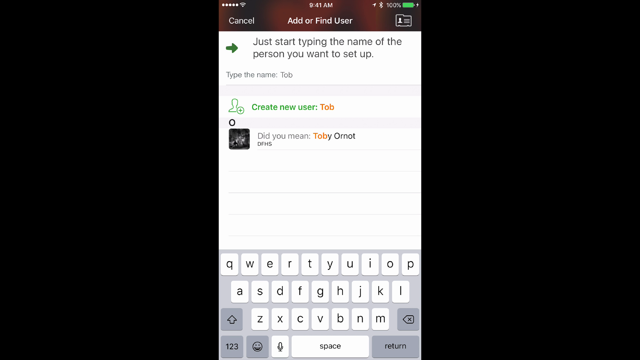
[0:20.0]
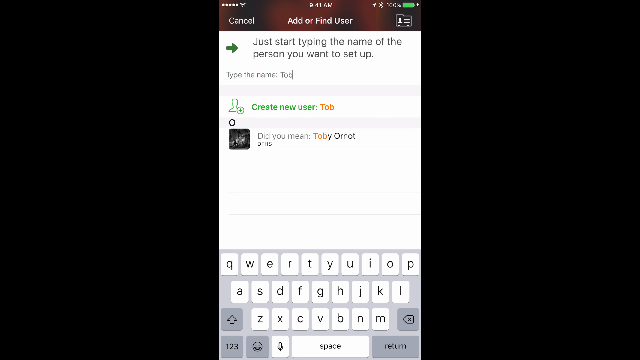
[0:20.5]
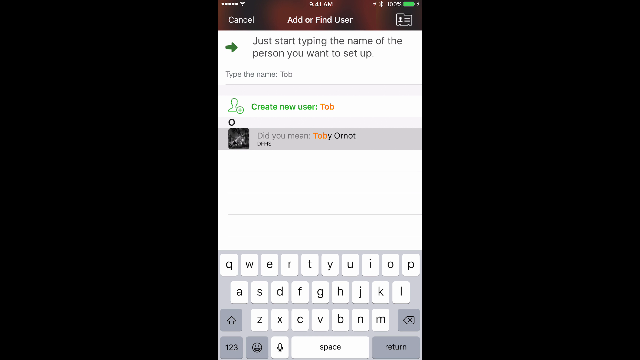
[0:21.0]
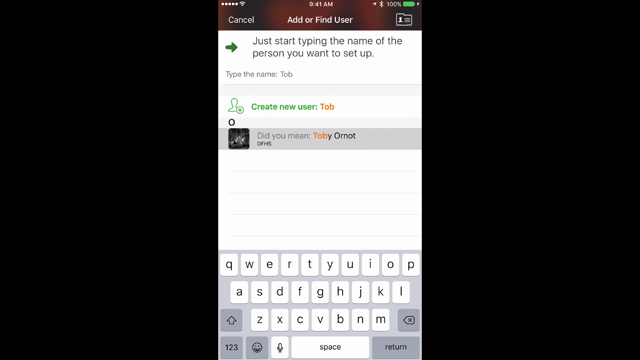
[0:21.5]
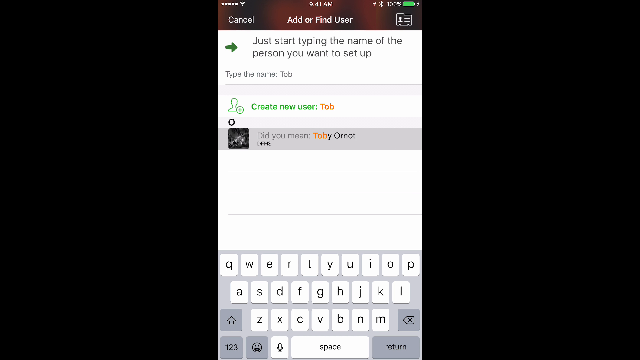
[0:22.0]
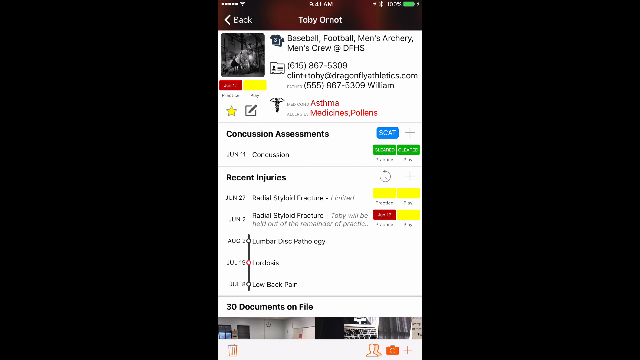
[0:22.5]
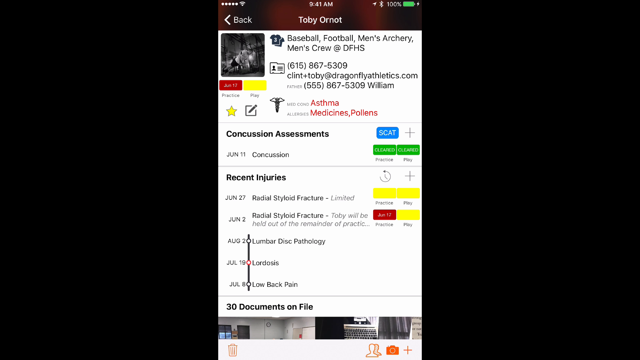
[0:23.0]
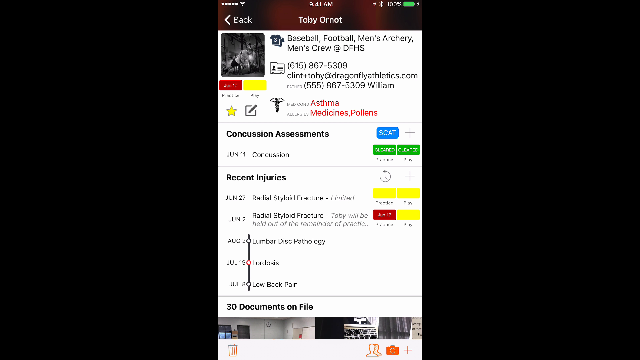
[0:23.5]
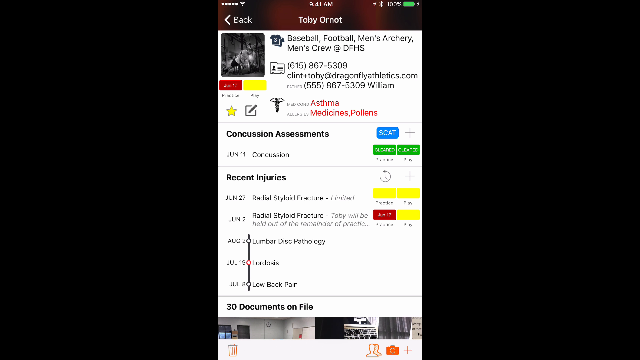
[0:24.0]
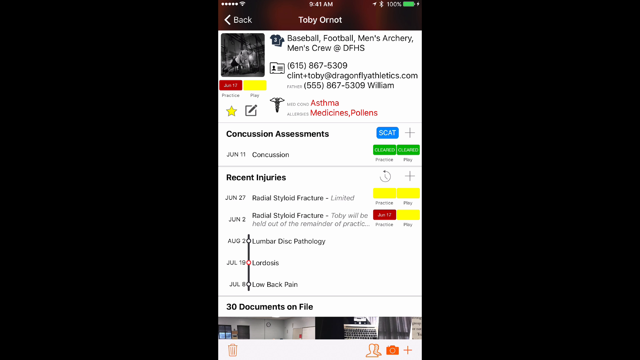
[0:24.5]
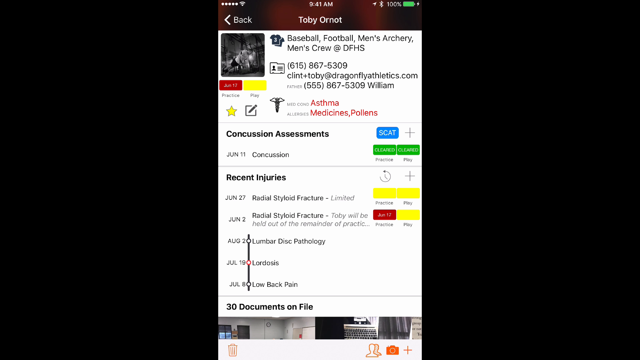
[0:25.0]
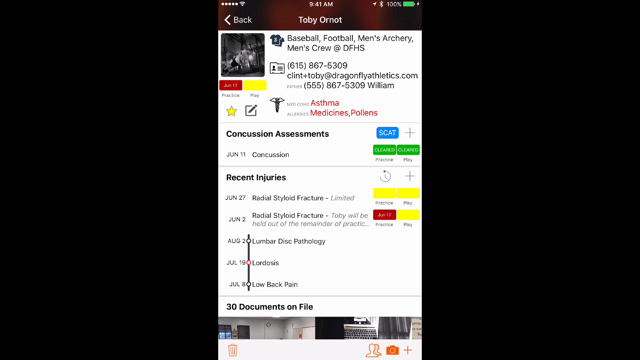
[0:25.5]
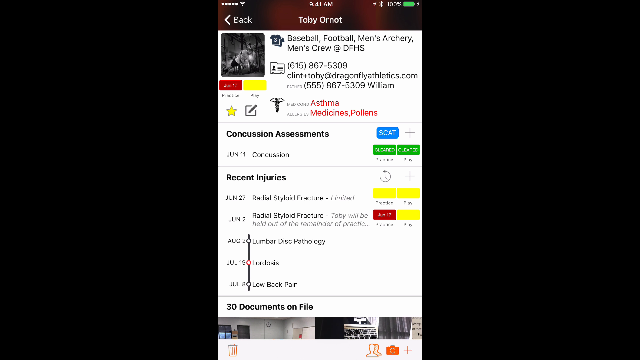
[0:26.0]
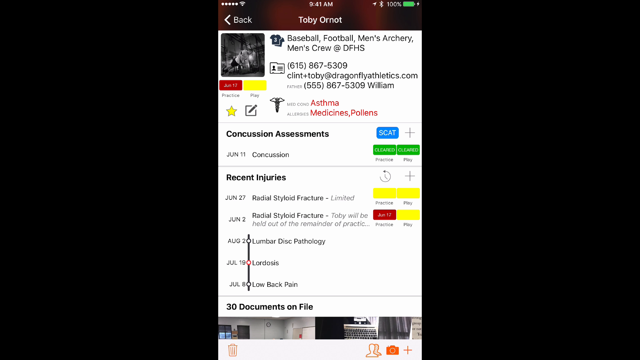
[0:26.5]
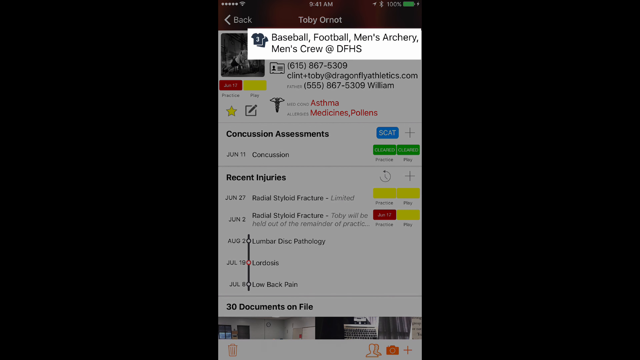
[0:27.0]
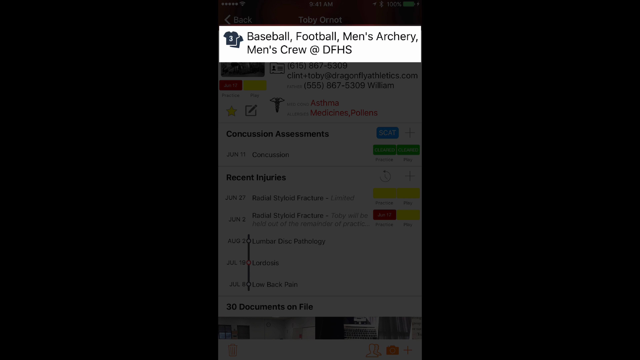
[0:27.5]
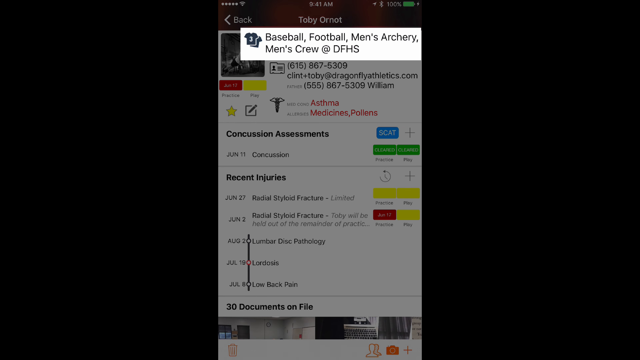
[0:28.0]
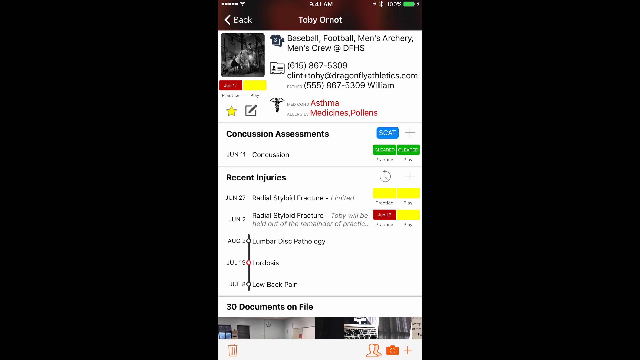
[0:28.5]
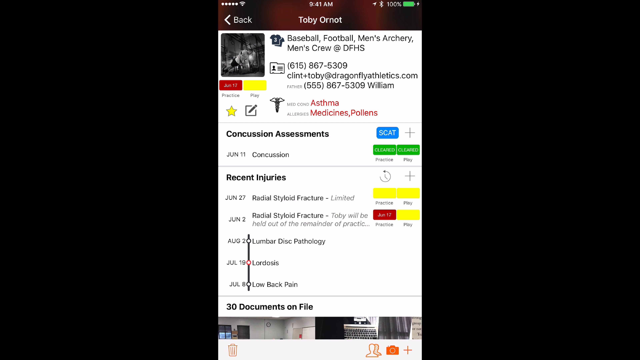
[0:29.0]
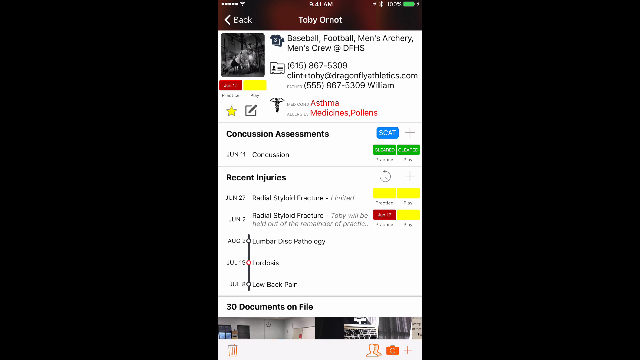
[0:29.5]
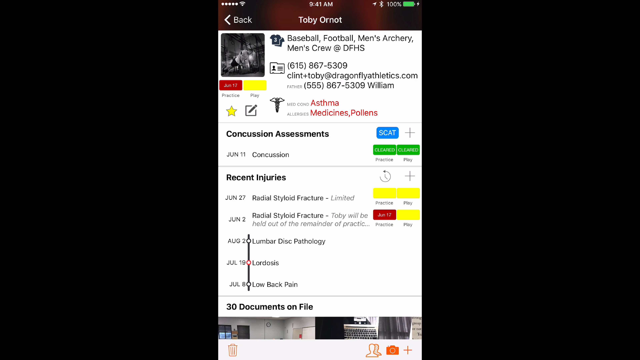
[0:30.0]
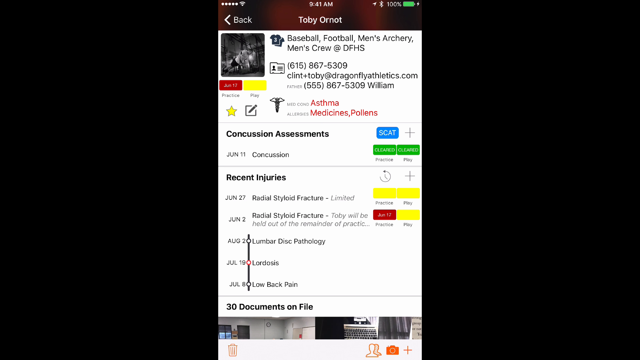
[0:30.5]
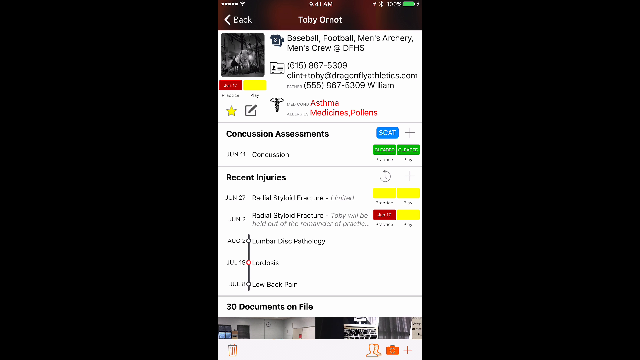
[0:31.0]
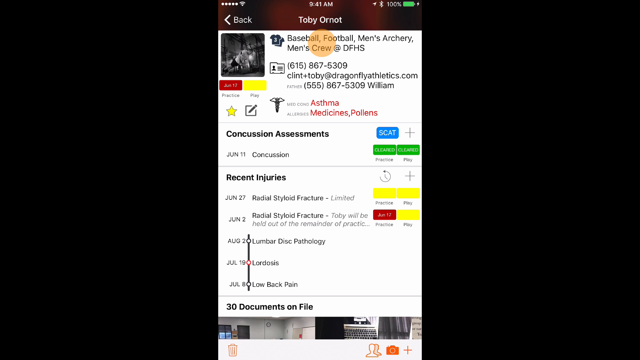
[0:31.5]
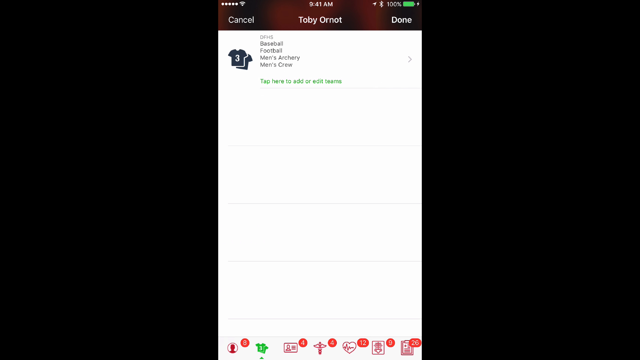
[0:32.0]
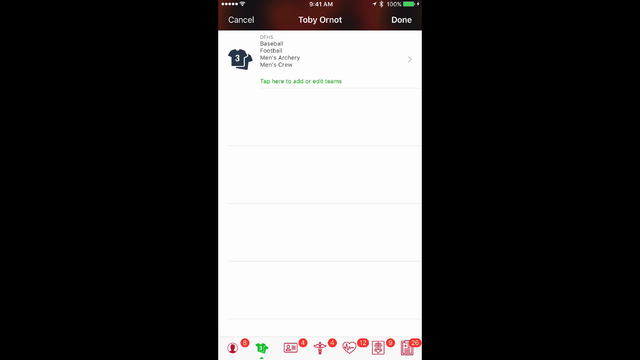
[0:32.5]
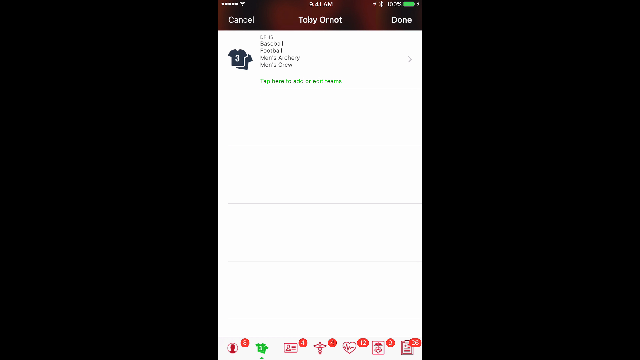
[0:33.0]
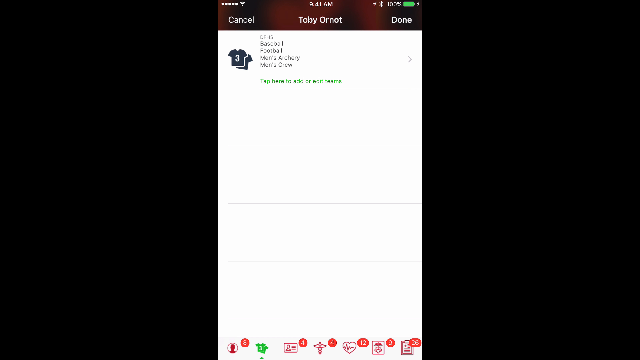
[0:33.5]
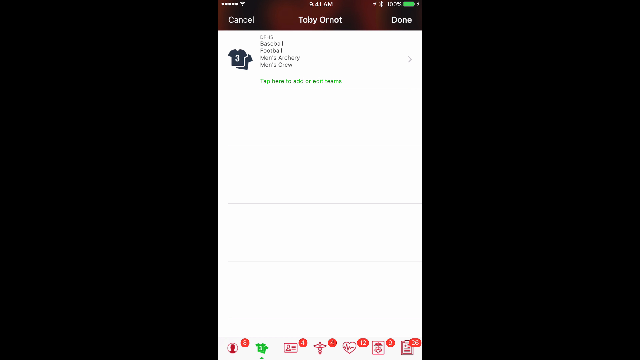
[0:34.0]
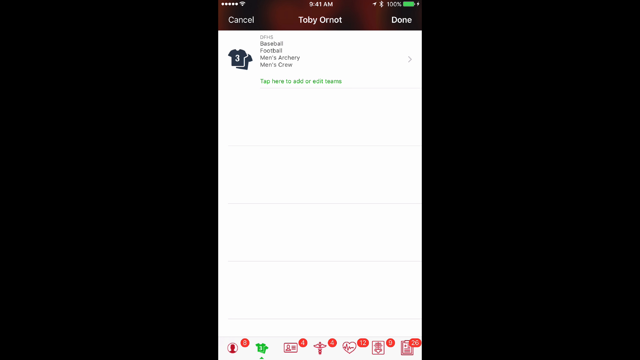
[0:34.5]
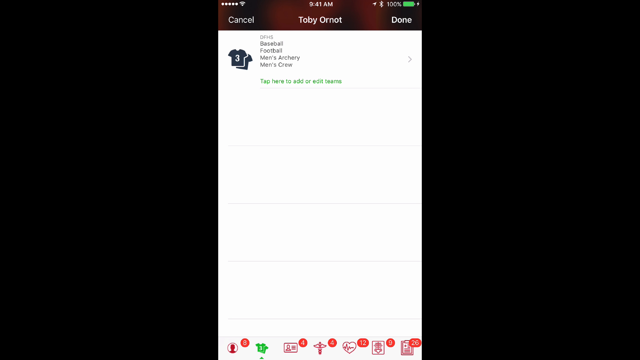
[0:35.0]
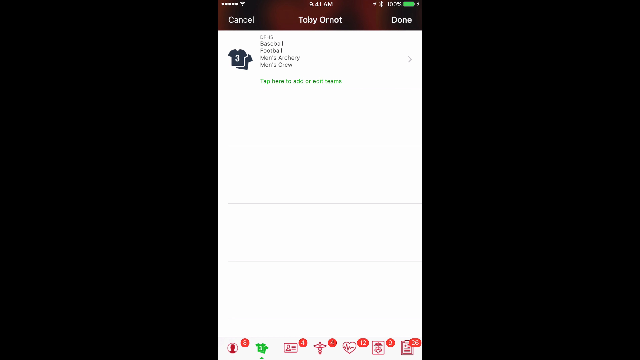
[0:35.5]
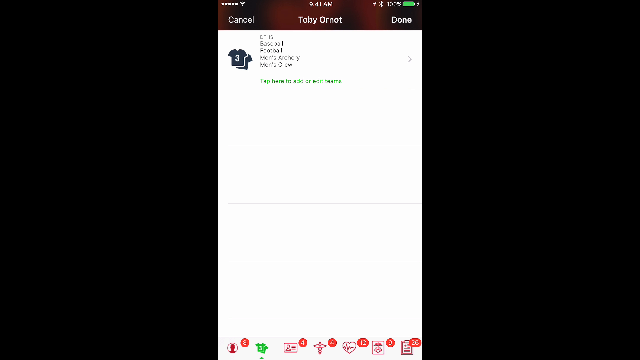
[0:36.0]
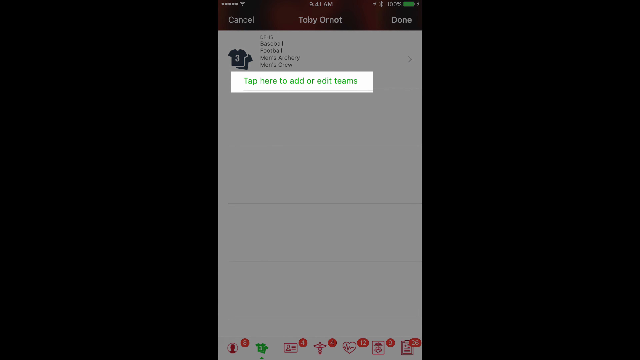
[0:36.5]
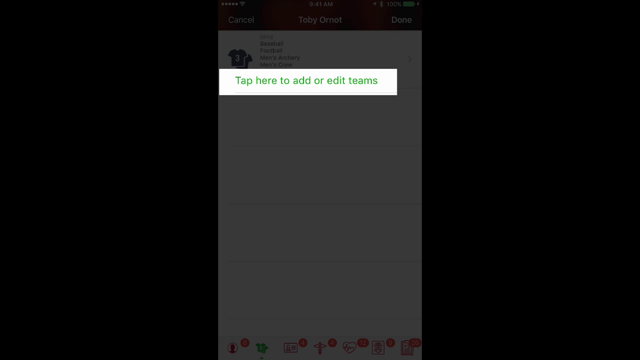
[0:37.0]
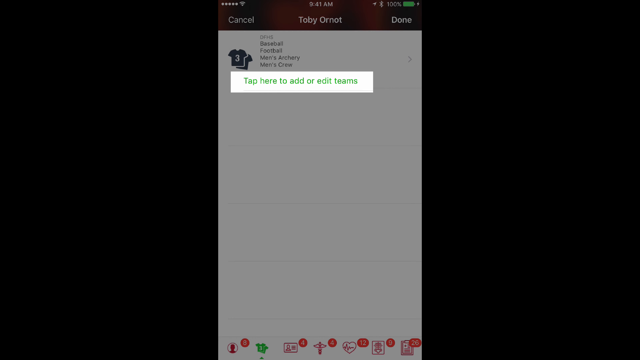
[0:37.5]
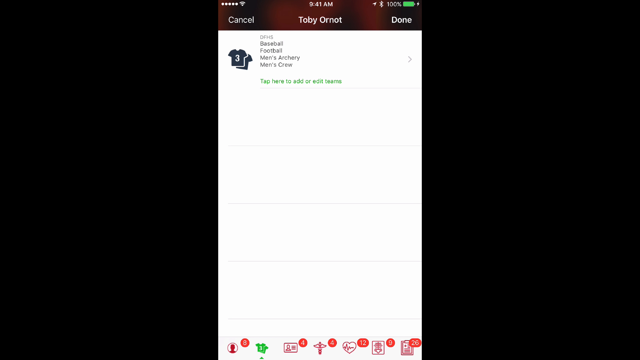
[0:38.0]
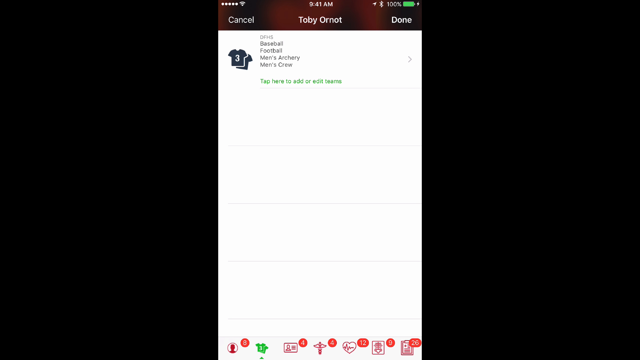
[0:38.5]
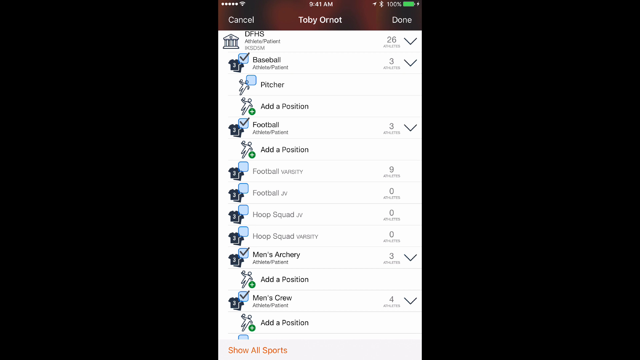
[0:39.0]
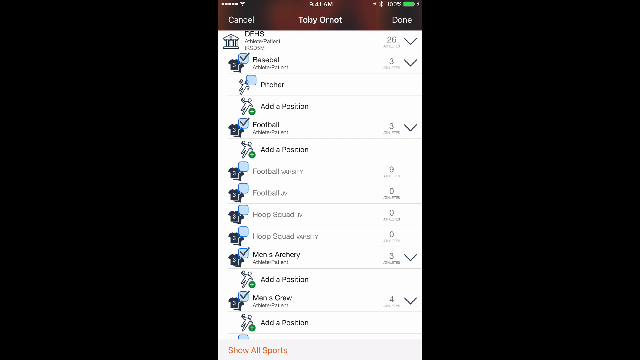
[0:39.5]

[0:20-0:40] Pages of what looks like a sports app are shown. At the top is the name Toby Ornot, with a section that says "baseball, football, men's archery, men's crew @ dfhs," a phone number underneath, and a few other lines. A section labeled "Concussion Assessments" appears to have a place to add that kind of medical information along with a date; it shows the date June 11th with "Concussion" underneath. Another section, "Recent Injuries," lists several items: a "Radial Styloid Fracture" on June 27th with "limited" next to it, another Radial Styloid Fracture on June 2nd, an entry for August whose day is hard to read, possibly the 2nd or the 20th, one for July 19th, and more. In a few places what appears to be a highlighter is used, orange in one place, and the view zooms in on different sections of this page and of a few other pages.